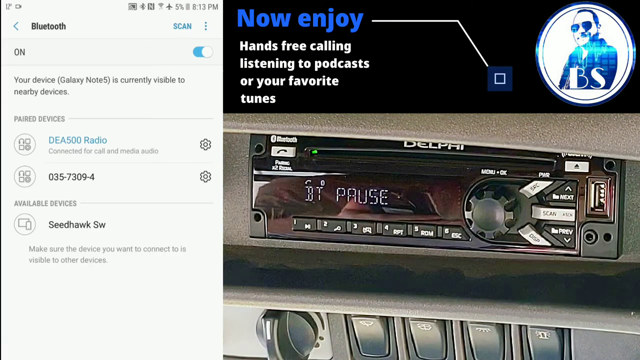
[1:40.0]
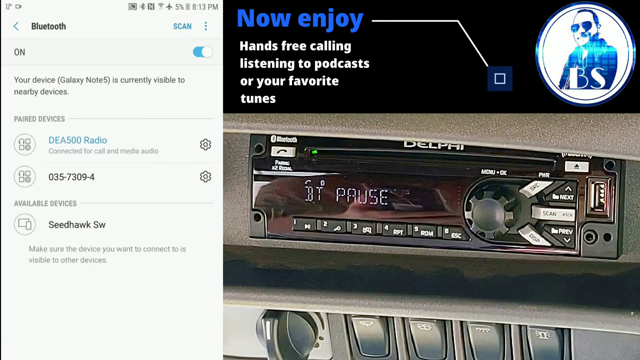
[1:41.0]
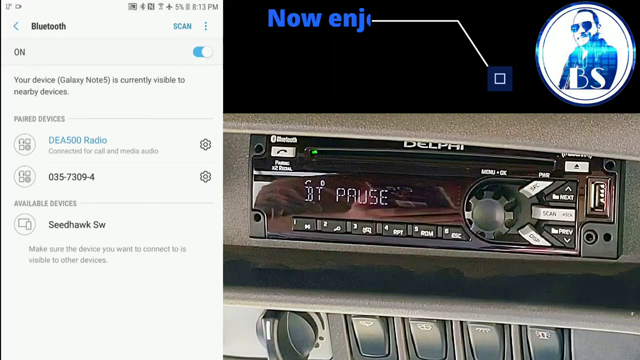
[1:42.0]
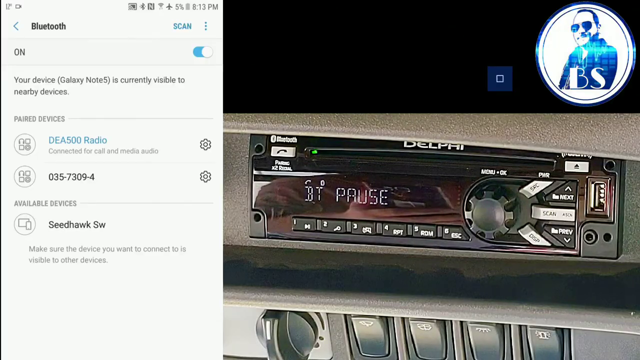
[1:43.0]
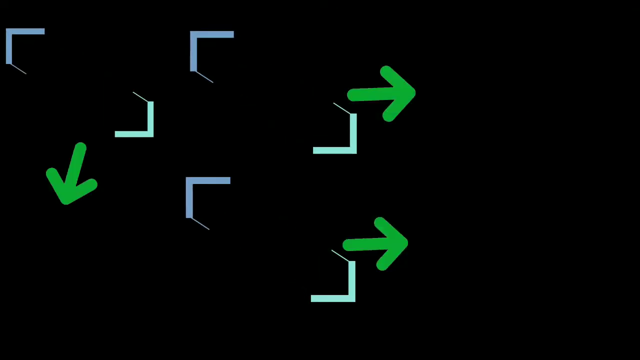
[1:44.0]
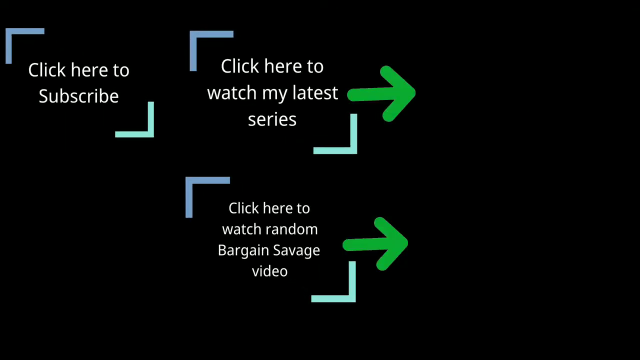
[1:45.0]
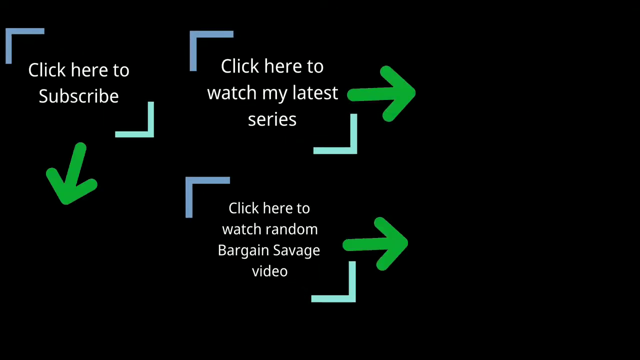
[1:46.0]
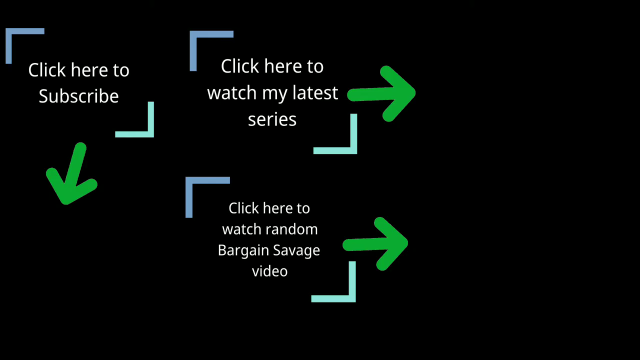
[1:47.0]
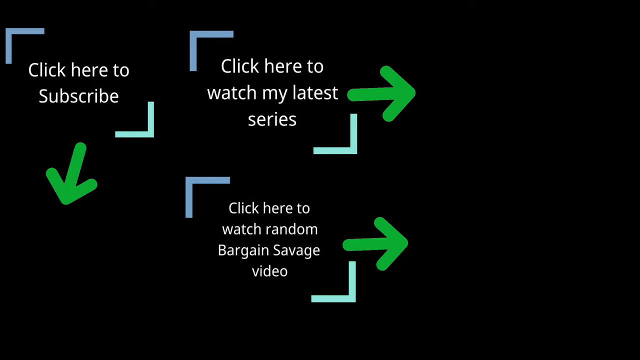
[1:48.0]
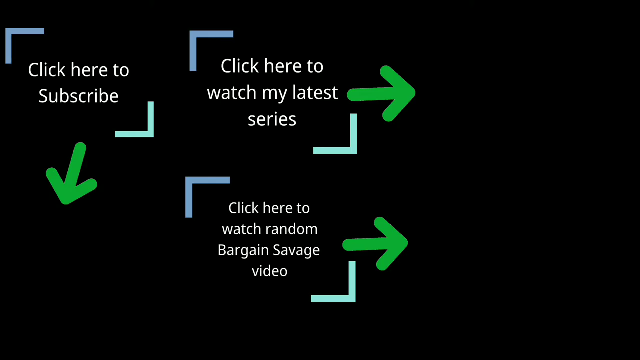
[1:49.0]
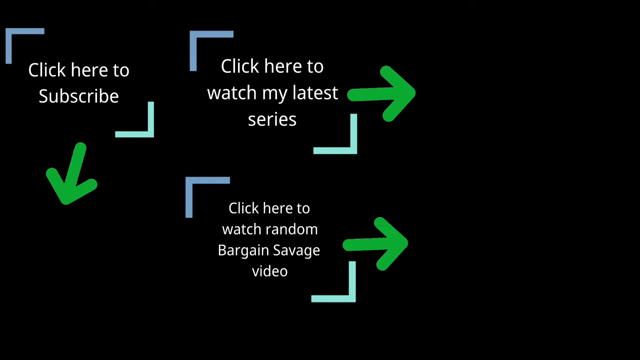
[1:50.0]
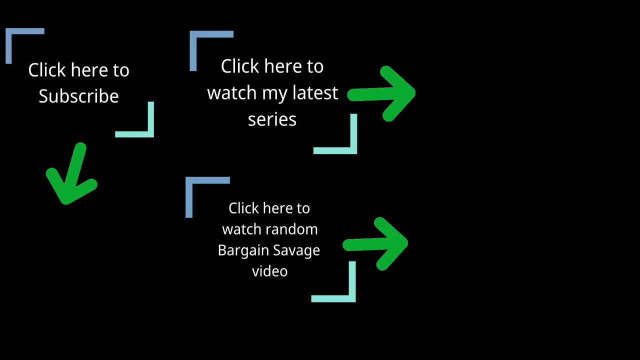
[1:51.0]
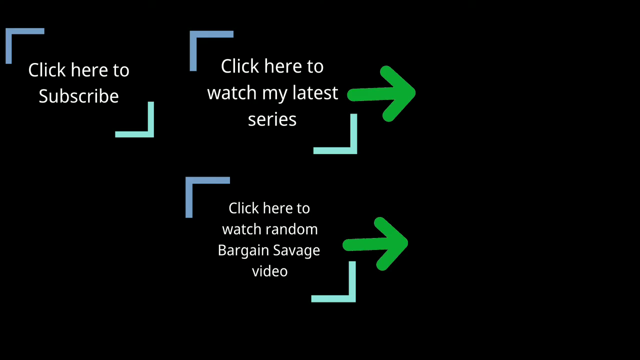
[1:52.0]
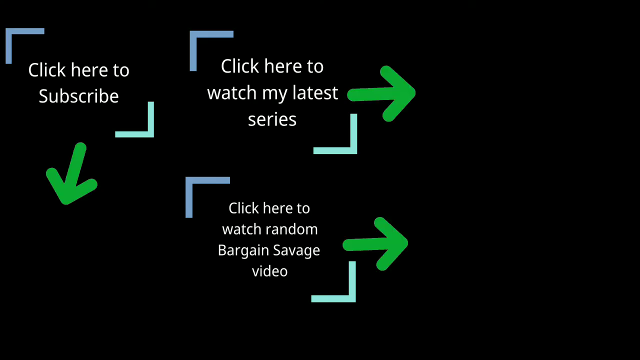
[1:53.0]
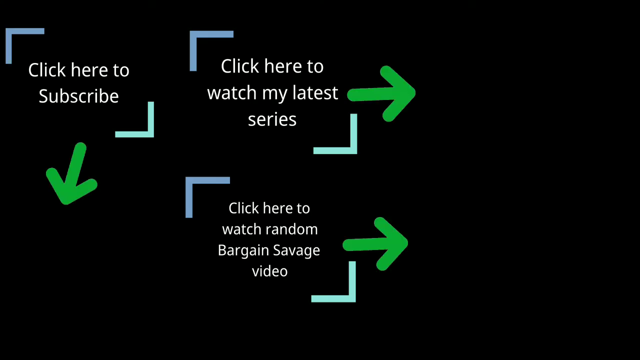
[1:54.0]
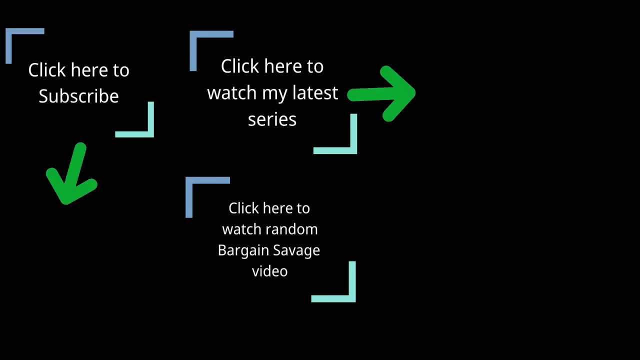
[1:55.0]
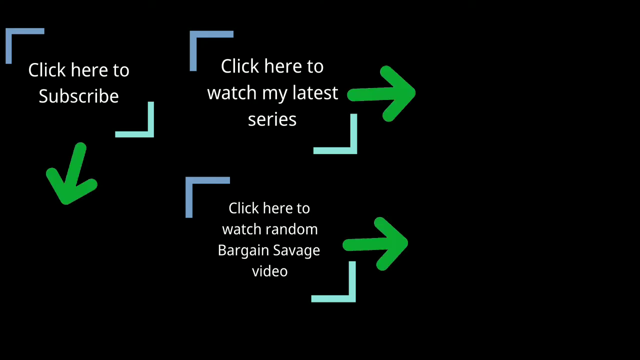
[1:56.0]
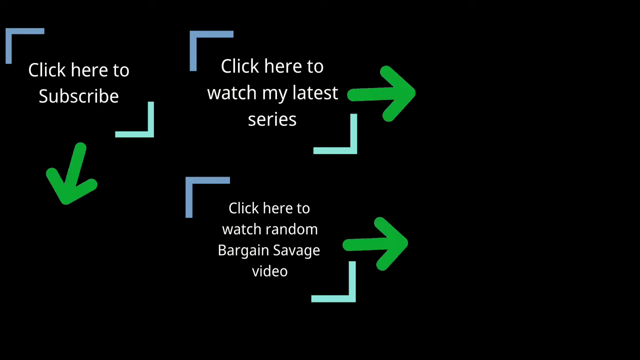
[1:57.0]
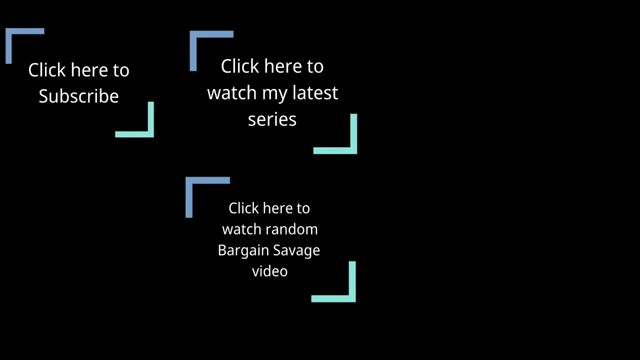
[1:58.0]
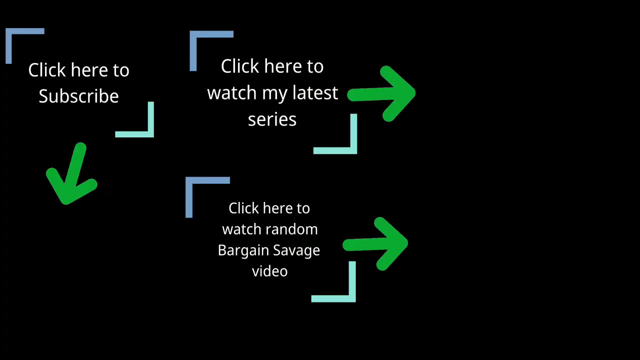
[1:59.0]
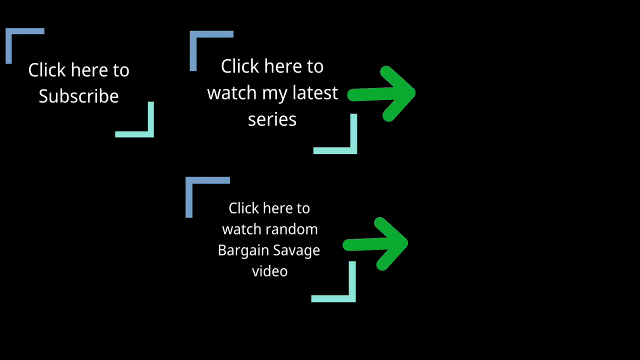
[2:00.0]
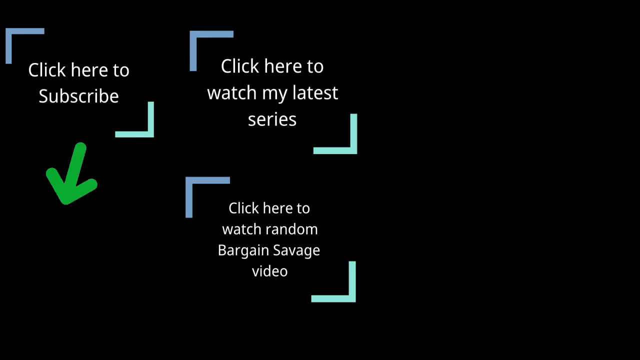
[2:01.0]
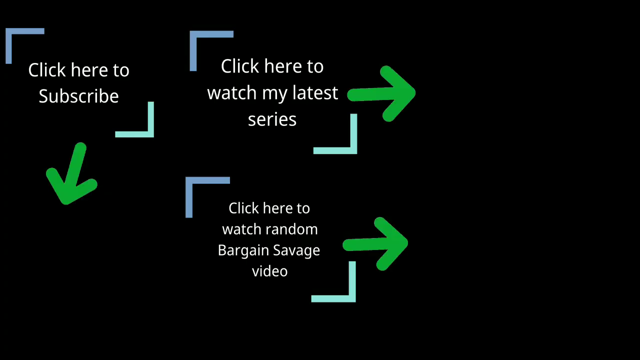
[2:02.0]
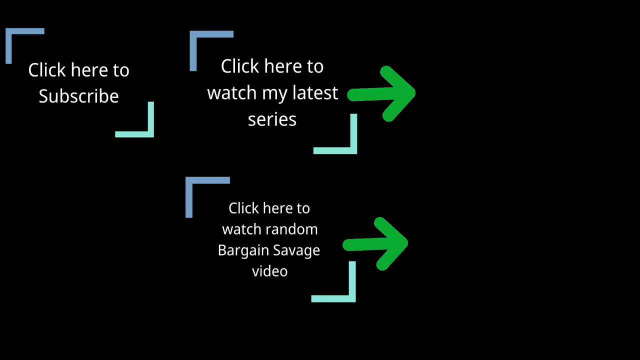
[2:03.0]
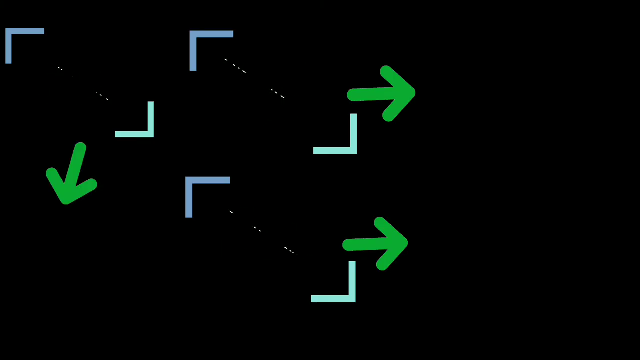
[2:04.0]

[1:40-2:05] A shared phone screen takes up one-third of the frame, open to the Bluetooth menu, while the other side shows someone recording their car's audio system or CD player, with the text "Now enjoy hands-free calling, listening to podcasts, or your favorite tunes". That banner disappears and transitions to an image on a black background with green arrows pointing in different directions: two pointing right and one pointing down and slightly to the left. The arrow pointing down and to the left is labeled "Click here to subscribe", with two brackets in either corner as if forming a rectangle. Next to it, an arrow pointing right is labeled "Click here to watch my latest series". Below that is "Click here to watch random bargain savage video", which also points to the left. The arrows animate and flash a few times.